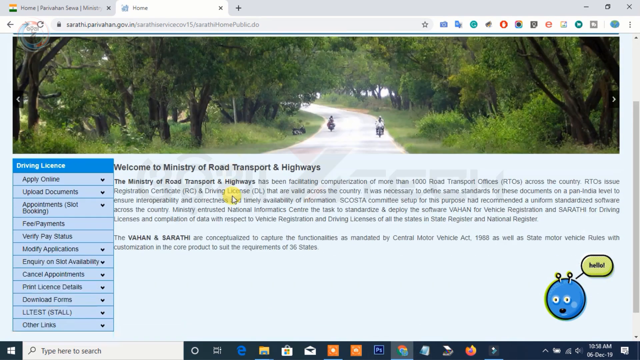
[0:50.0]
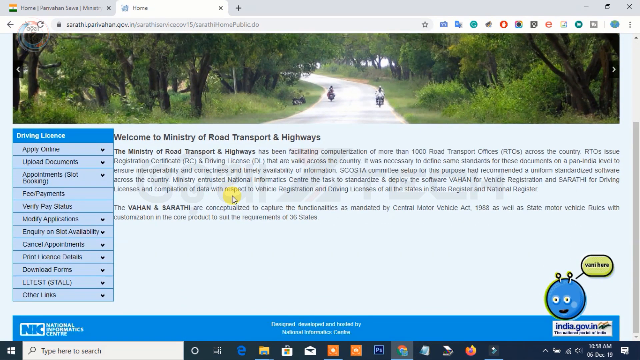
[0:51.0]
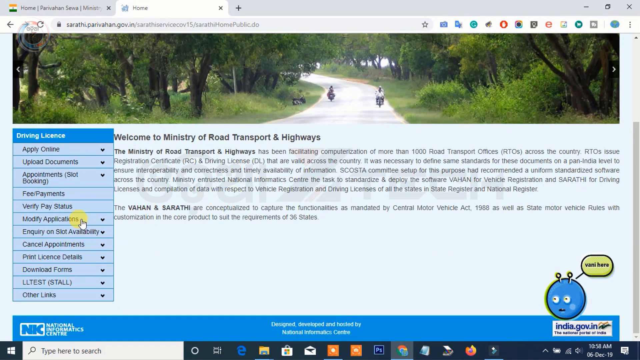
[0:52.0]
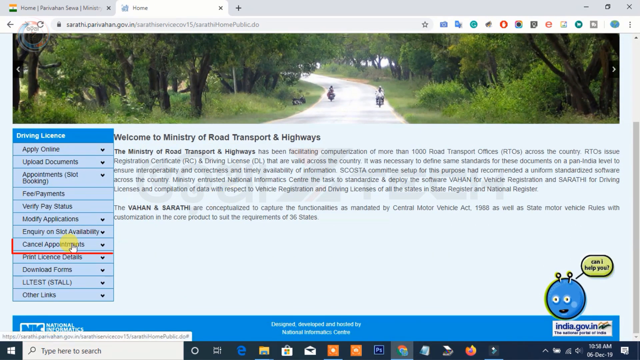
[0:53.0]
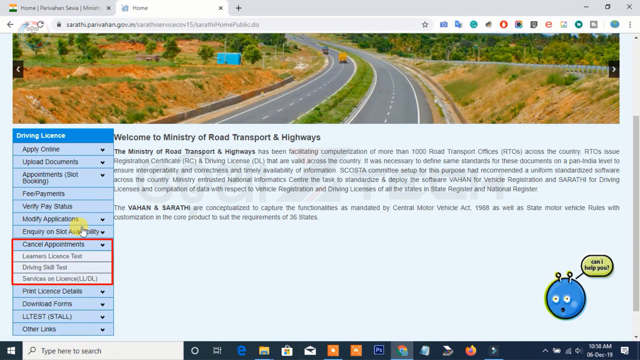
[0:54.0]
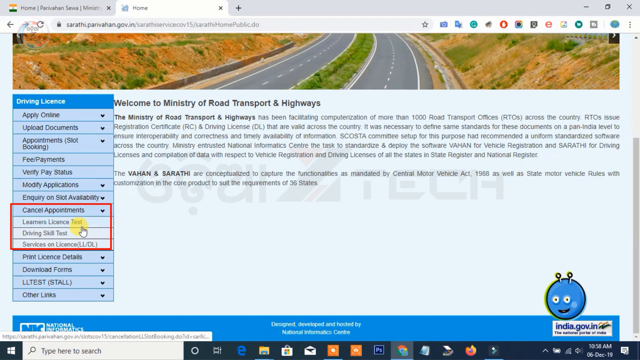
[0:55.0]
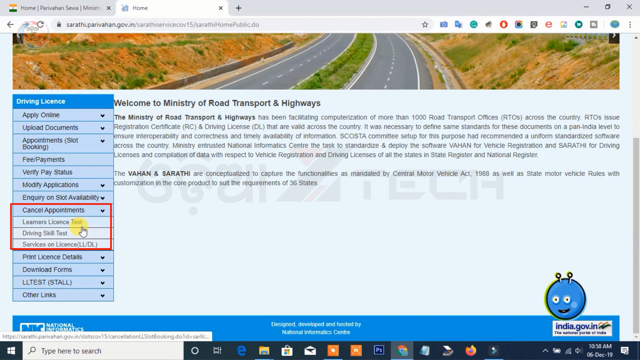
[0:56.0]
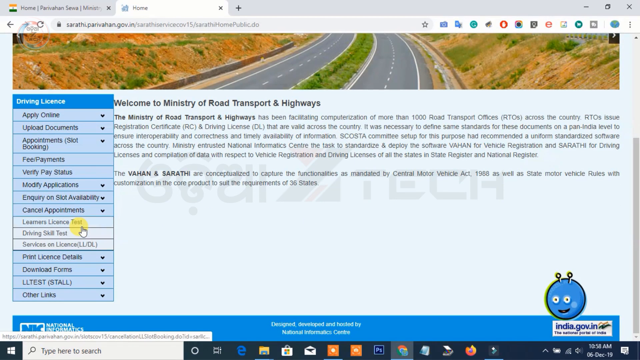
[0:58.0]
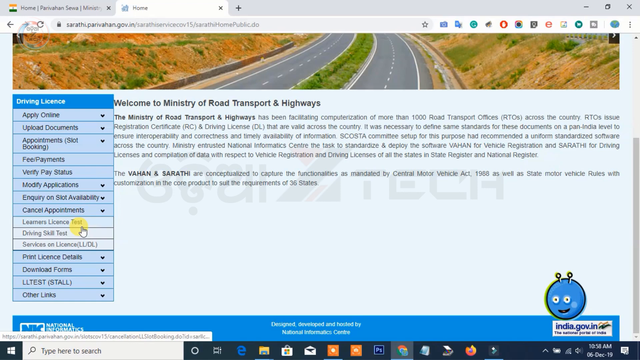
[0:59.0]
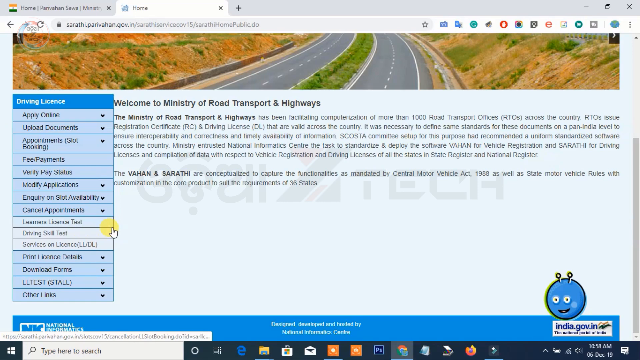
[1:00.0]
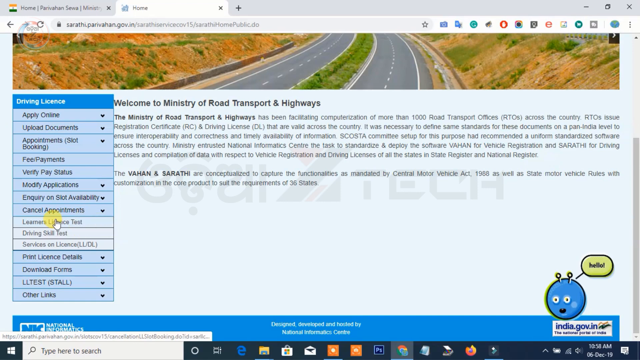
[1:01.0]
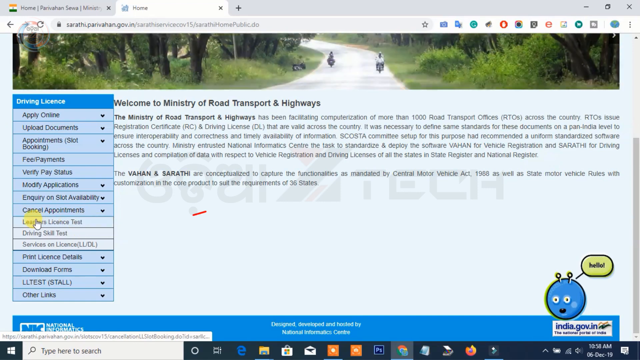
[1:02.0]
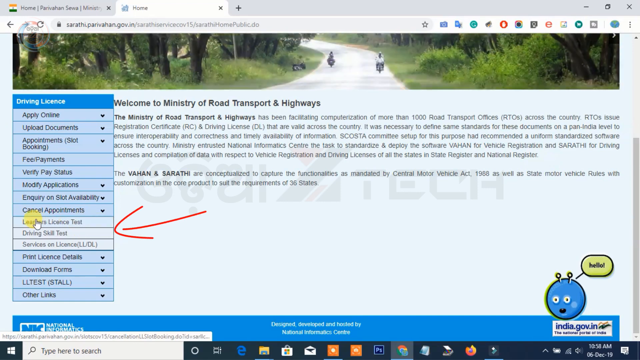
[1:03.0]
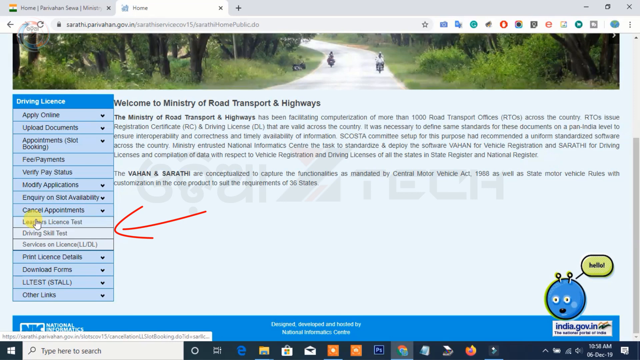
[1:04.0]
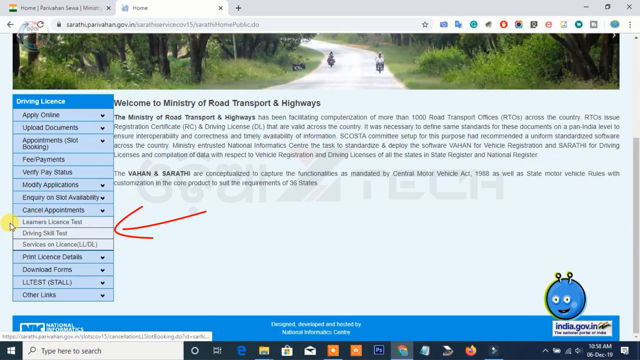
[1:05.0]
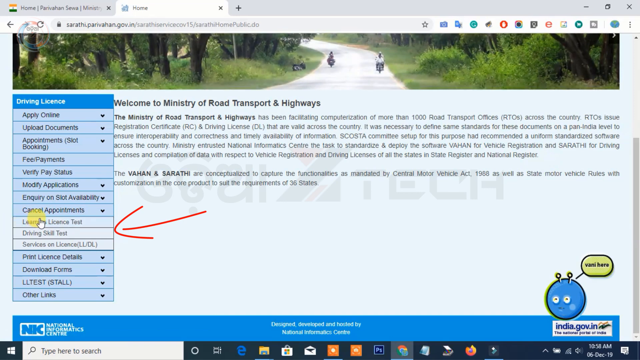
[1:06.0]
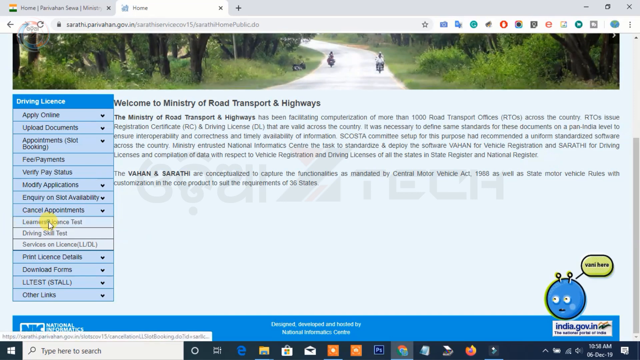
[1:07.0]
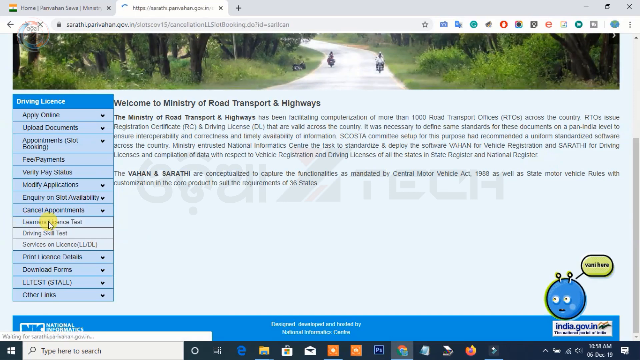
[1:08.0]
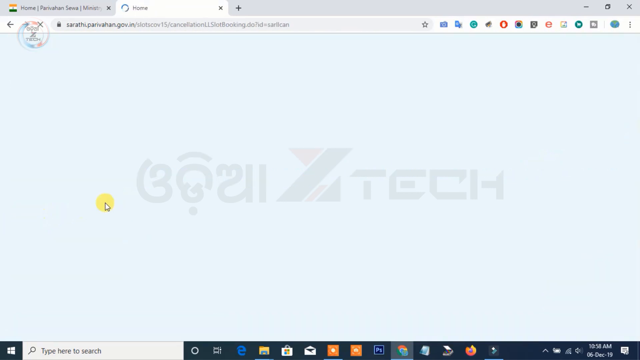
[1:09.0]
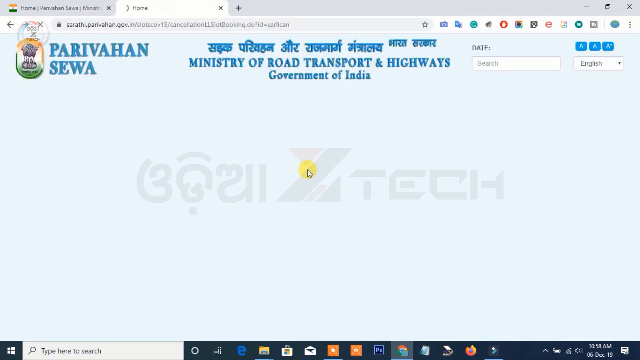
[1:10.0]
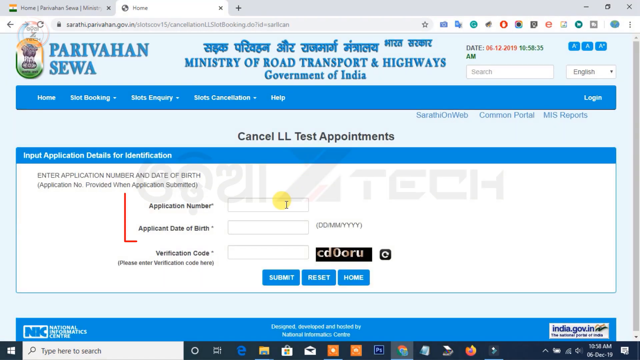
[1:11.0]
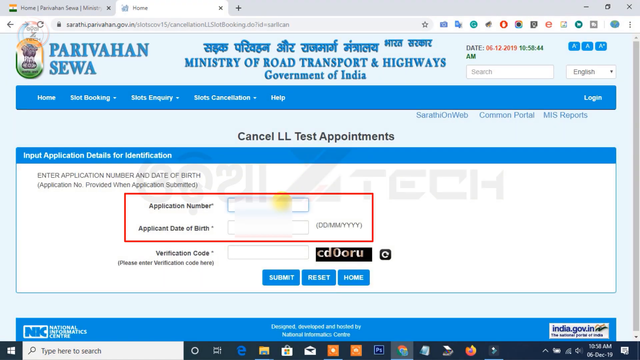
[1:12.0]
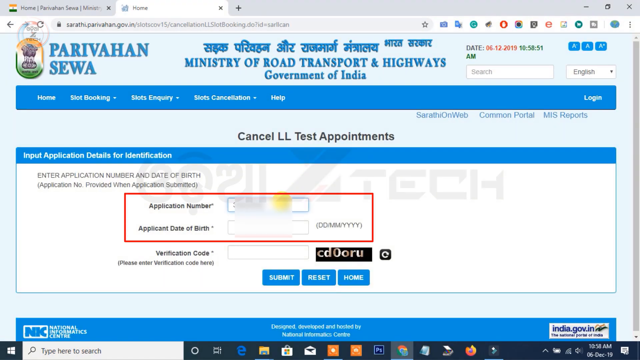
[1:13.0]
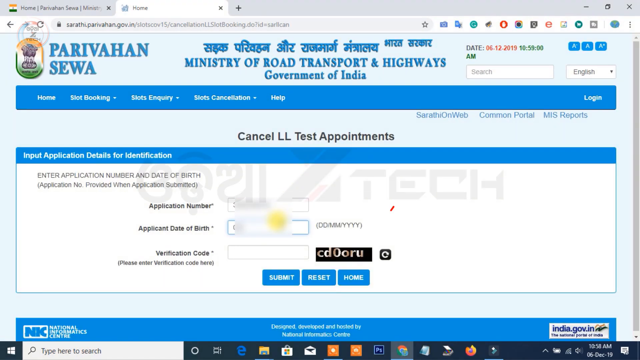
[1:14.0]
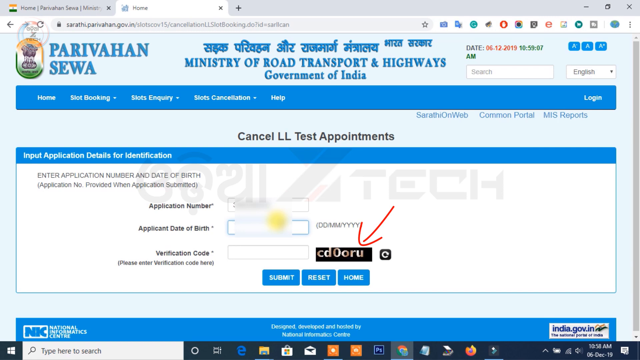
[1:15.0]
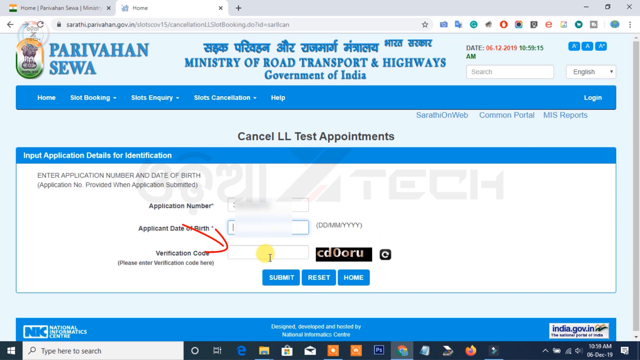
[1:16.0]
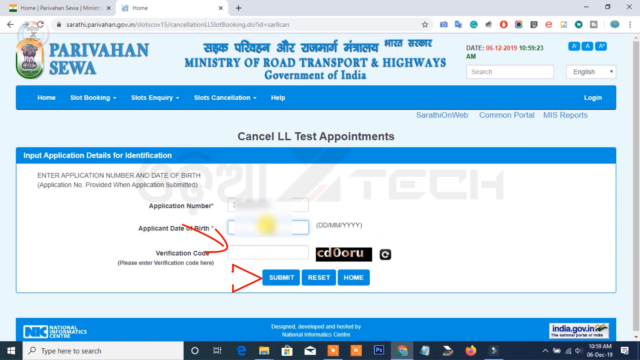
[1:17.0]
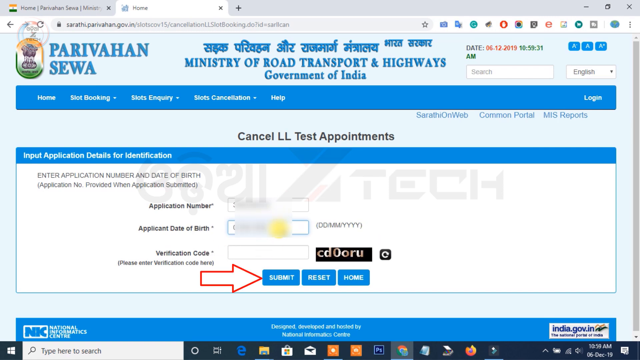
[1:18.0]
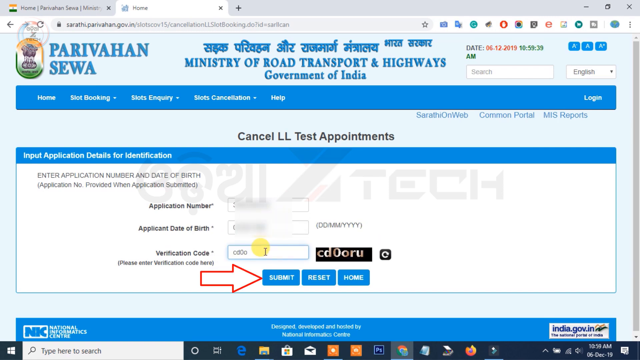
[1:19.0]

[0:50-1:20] A page reads "Welcome to the Ministry of Road, Transport, and Highways", followed by a fairly long paragraph beginning "The Ministry of Road, Transport, and Highways has been facilitating computerization of more than 1,000 road transport offices, or RTOs, across the country." Below it is a very short paragraph about the Vahan and Sarathi, which mentions the Central Motor Vehicle Act 1968, state motor vehicle rules and customization to suit the requirements of 36 states. The person scrolls down, and the arrow points to links near the bottom labeled "Learner's License Test". Clicking one of the links leads to "Cancel LL Test Appointments", which shows where to enter the application number and the other information needed to cancel the appointment.